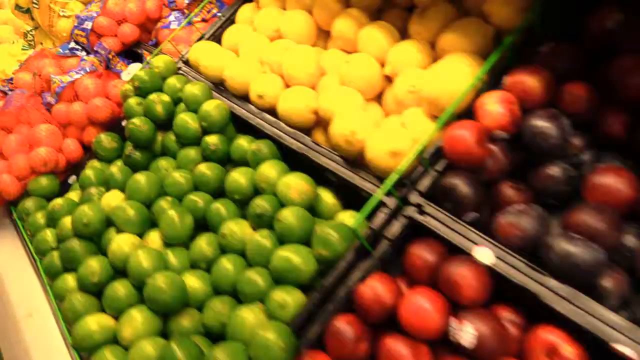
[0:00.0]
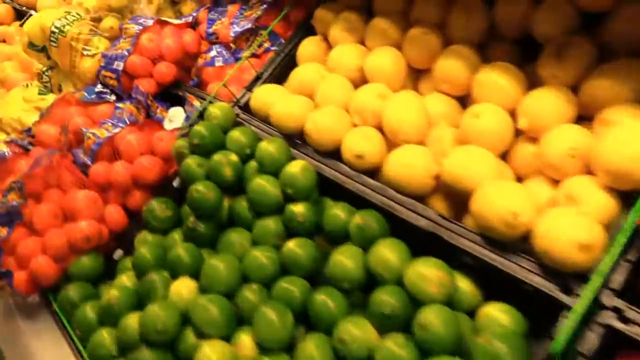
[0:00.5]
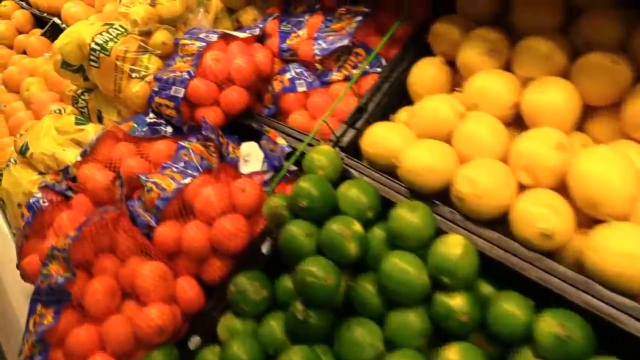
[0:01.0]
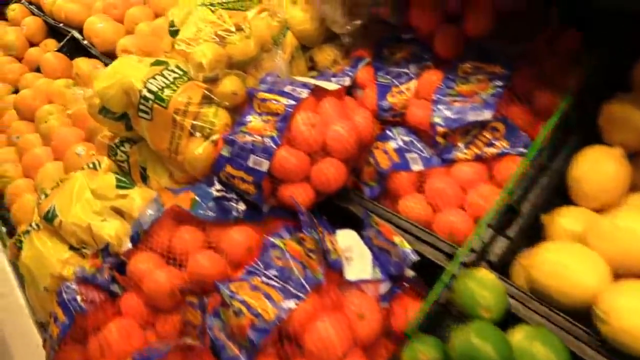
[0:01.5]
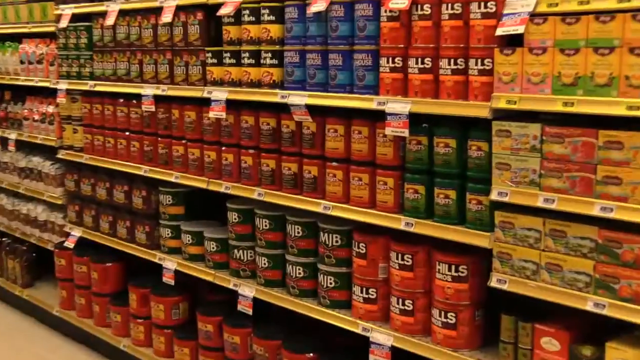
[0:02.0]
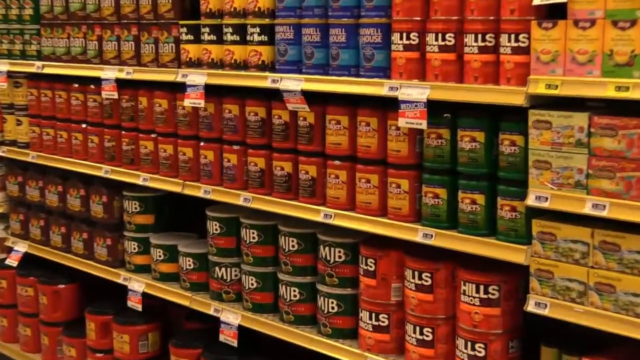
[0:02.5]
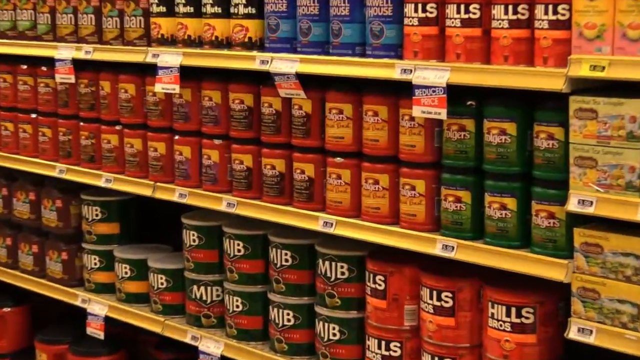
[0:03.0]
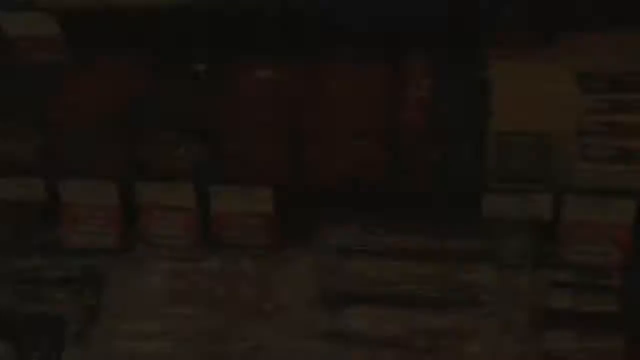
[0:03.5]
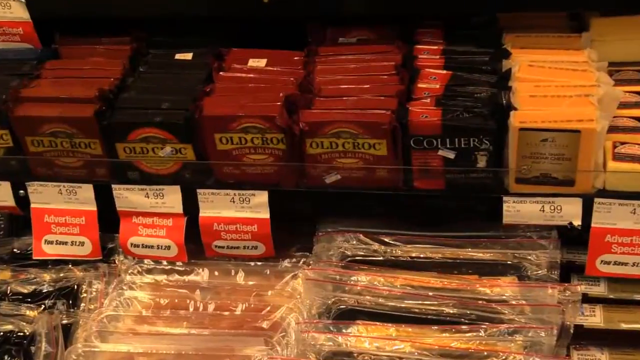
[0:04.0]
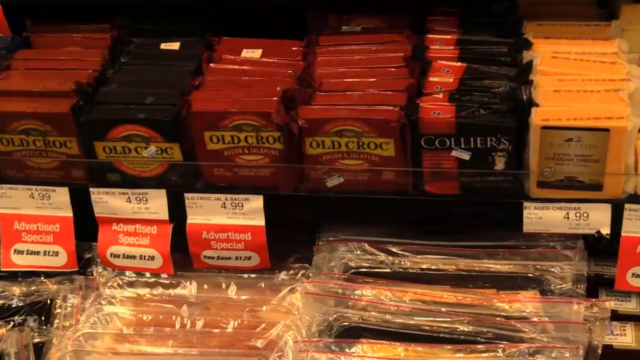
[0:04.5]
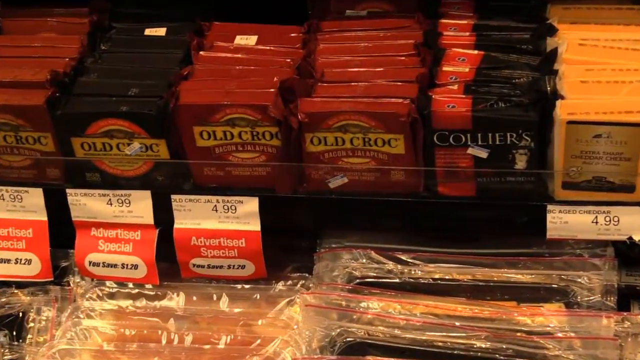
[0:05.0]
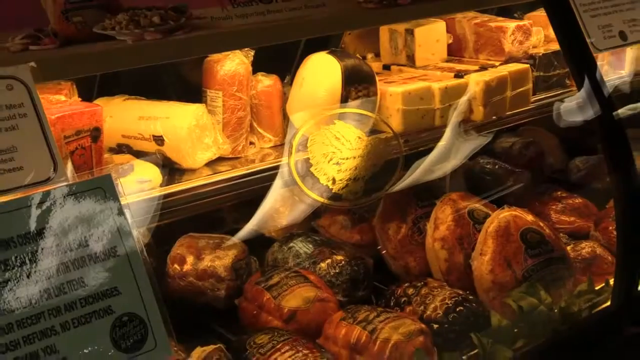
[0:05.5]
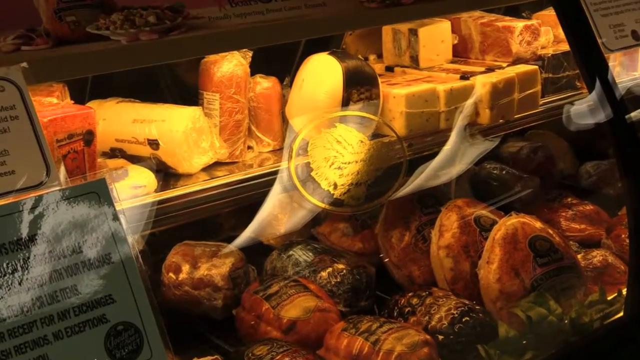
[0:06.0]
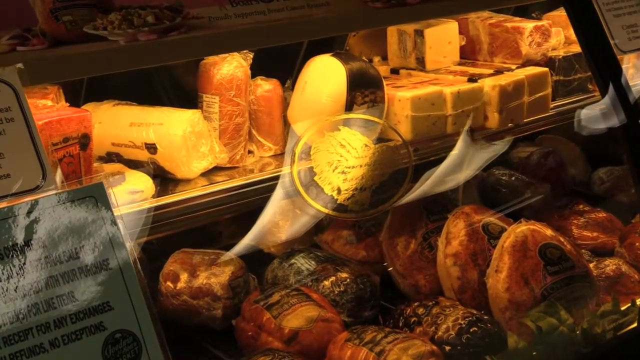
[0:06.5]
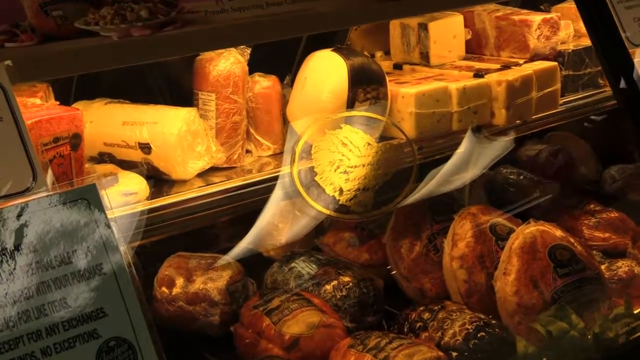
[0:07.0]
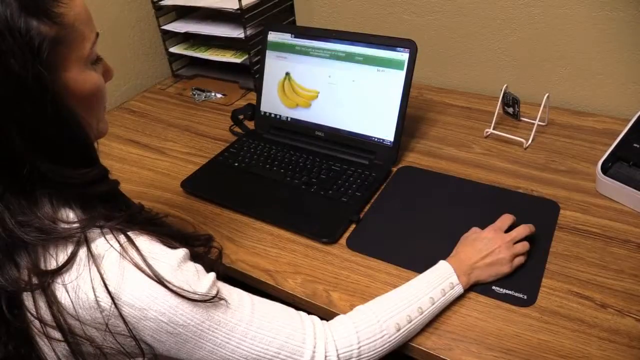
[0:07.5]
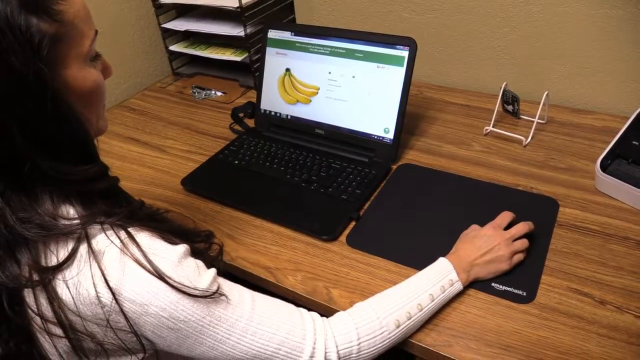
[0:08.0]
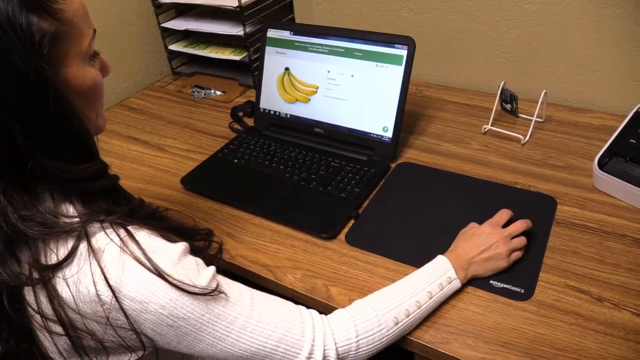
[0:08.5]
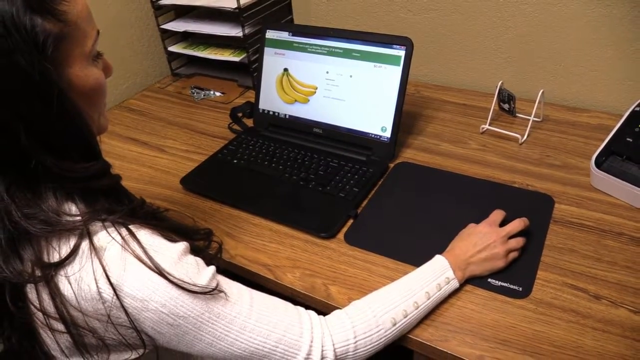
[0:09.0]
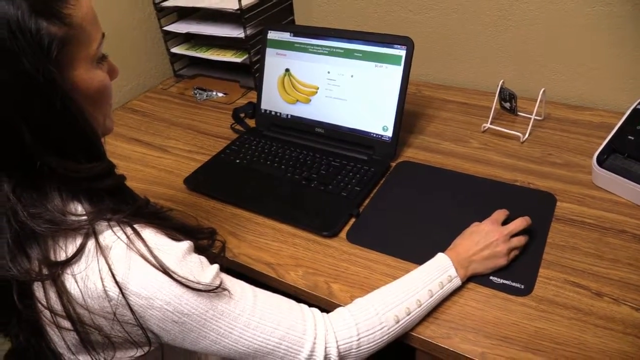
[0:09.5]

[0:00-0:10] Inside a grocery store, the video shows lemons and limes, oranges, coffees, chocolates, meats and cheeses. A woman is on her computer and might be shopping online; bananas with some of their prices are on her computer screen. There are bags of cuties and all kinds of fruits, including darker apples and lighter apples, with maybe some plums and prunes in that area as well. Bags of potatoes are visible, and there are lots of shelves with lots of food on them.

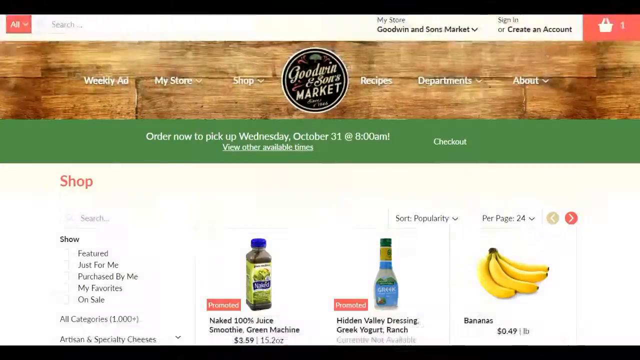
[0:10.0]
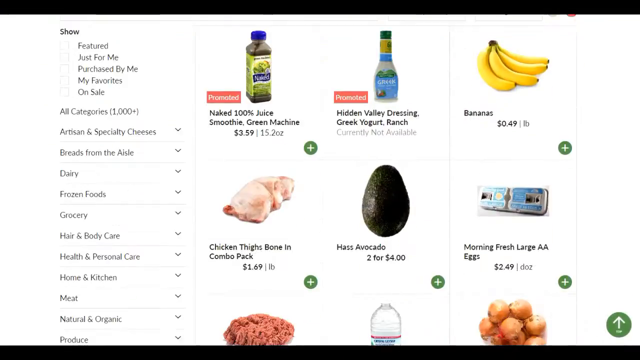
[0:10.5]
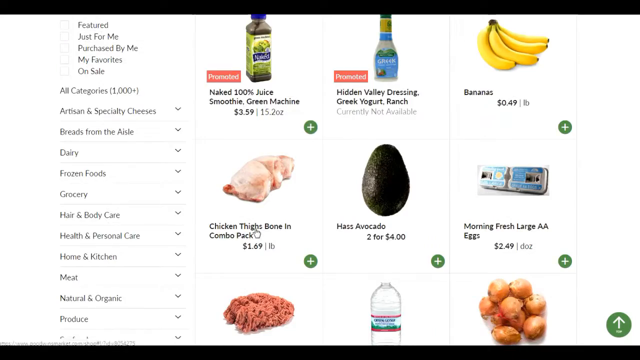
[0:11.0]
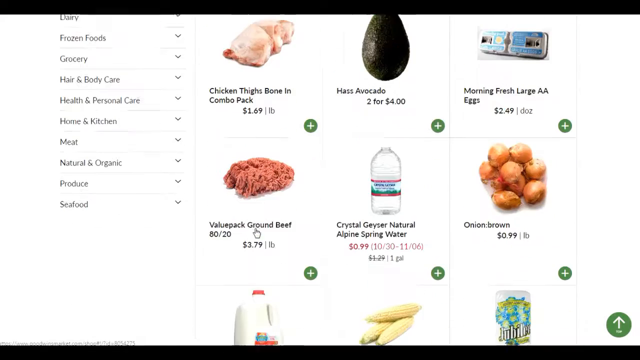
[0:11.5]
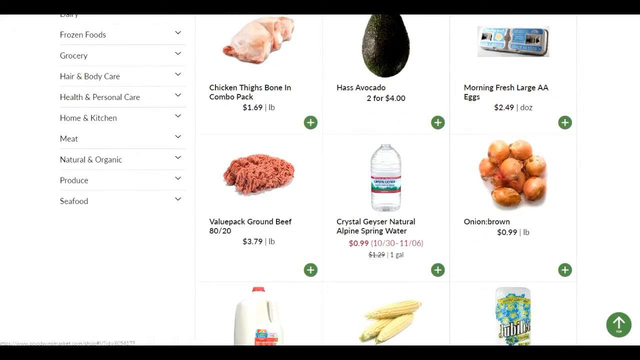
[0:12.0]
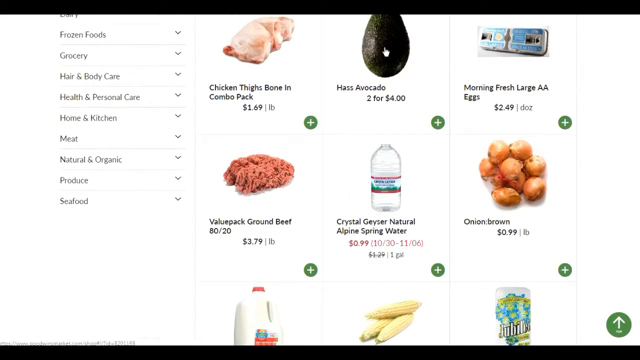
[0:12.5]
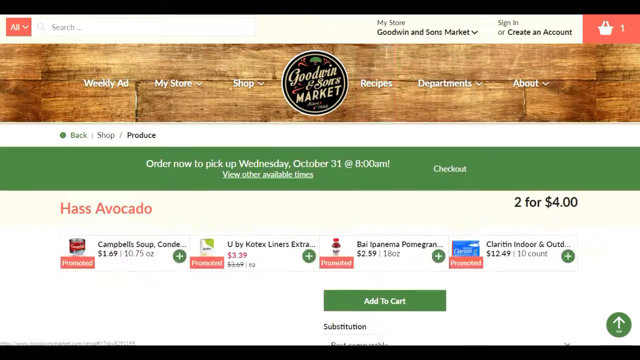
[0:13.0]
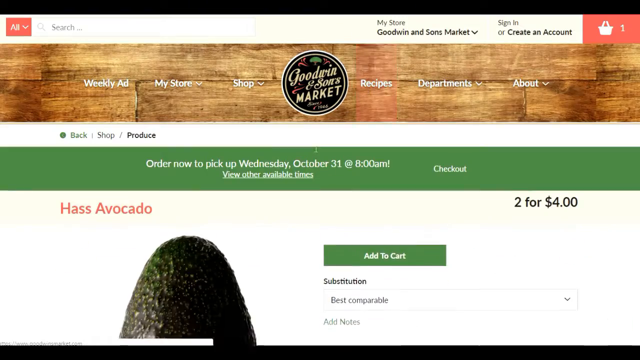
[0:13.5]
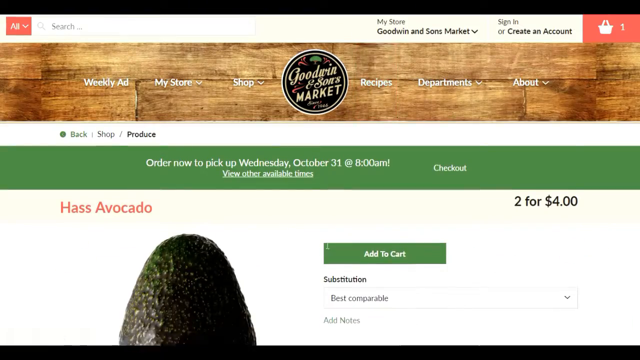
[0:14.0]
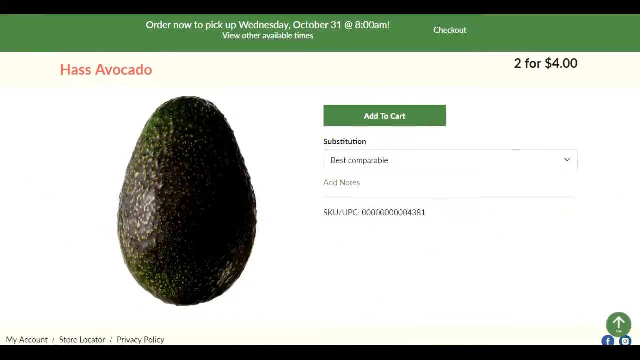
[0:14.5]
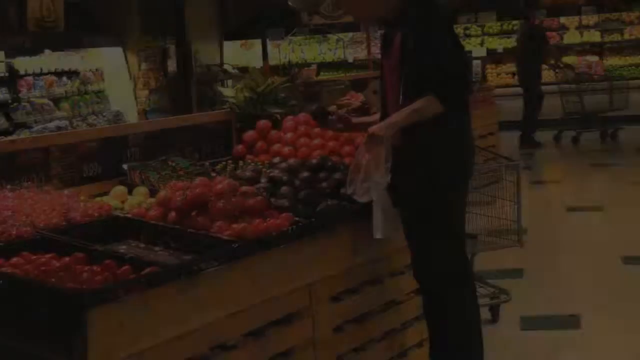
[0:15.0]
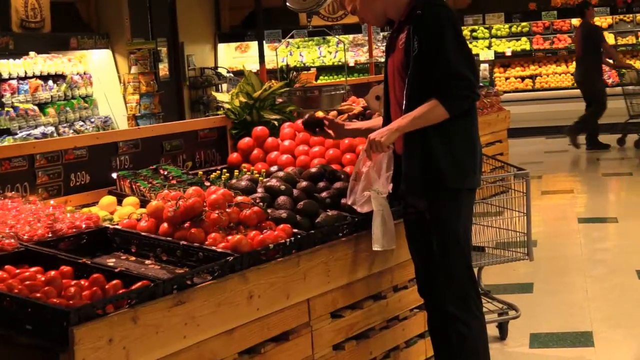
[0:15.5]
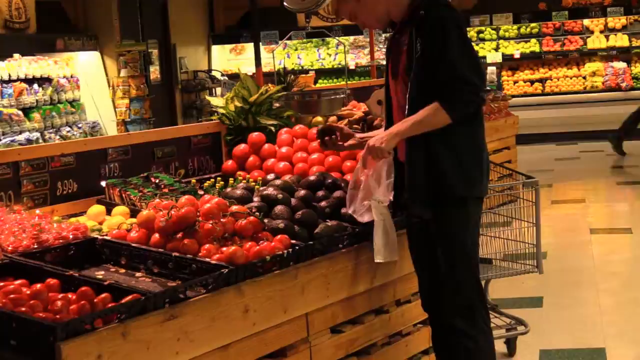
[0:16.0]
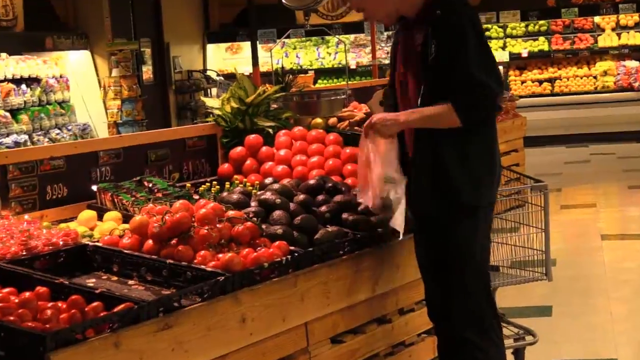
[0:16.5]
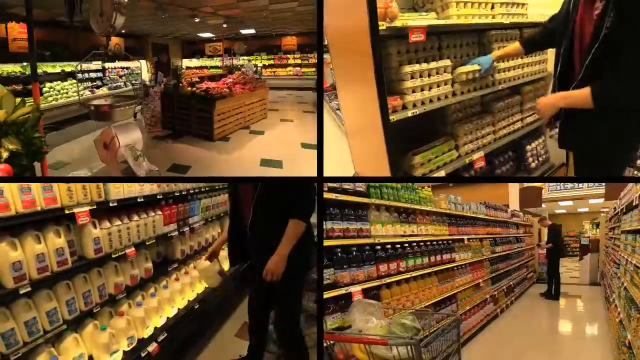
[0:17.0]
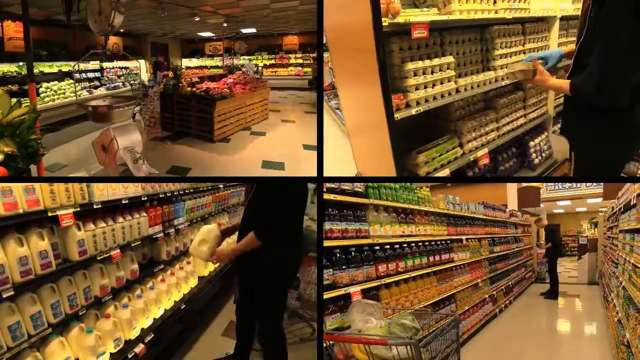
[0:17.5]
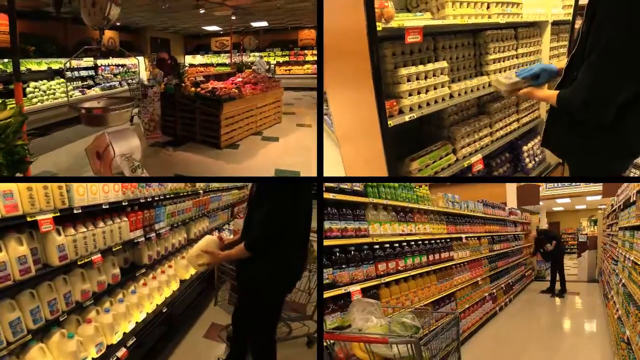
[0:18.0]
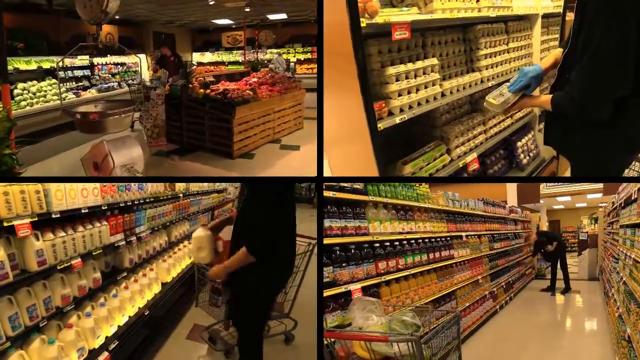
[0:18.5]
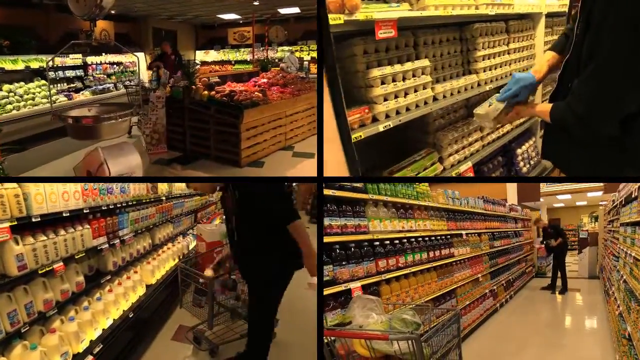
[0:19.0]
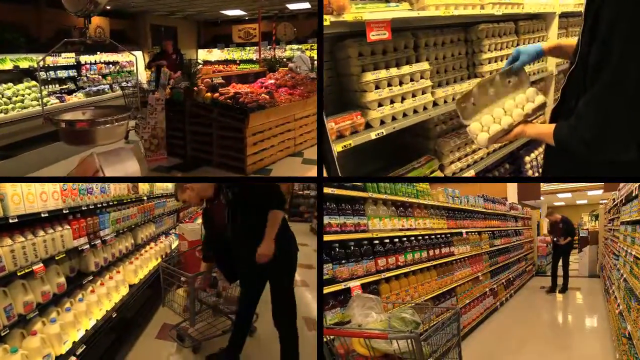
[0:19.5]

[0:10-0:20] A web page shows someone shopping for their groceries online, and an avocado has been picked out. Someone is maybe shopping for them, as what looks like a personal shopper goes out and gets the right foods. The page says "Goodwin and Sons Market" and "order now to pick up Wednesday, October 31st at 8 o'clock a.m.", with a link to view other available times and the weekly ads. A section that says "shopping" is open, showing olive oil, salad dressing and bananas.